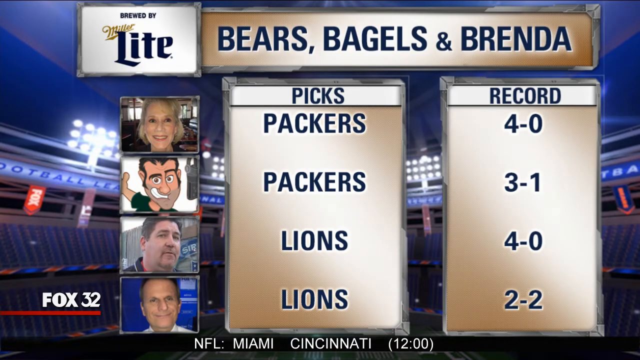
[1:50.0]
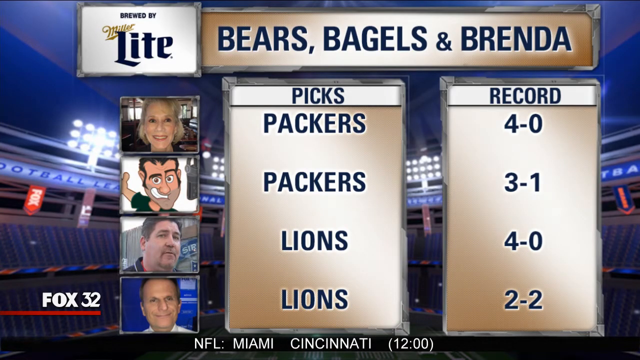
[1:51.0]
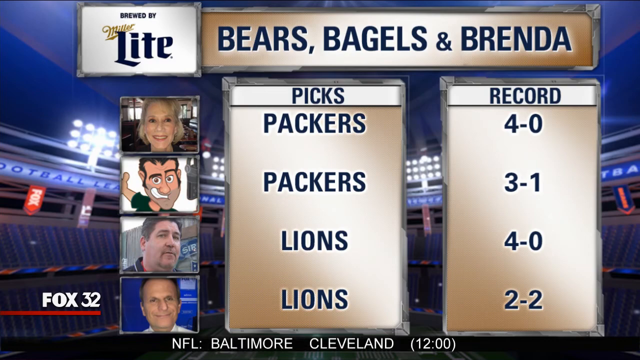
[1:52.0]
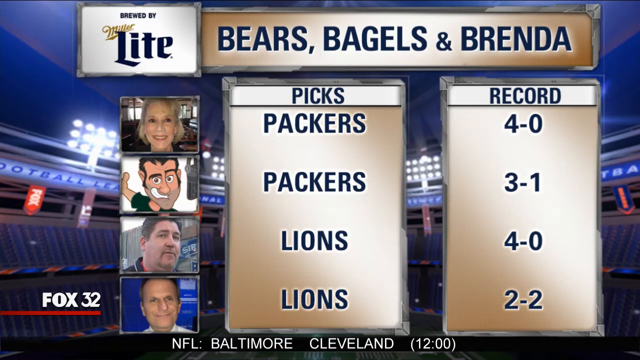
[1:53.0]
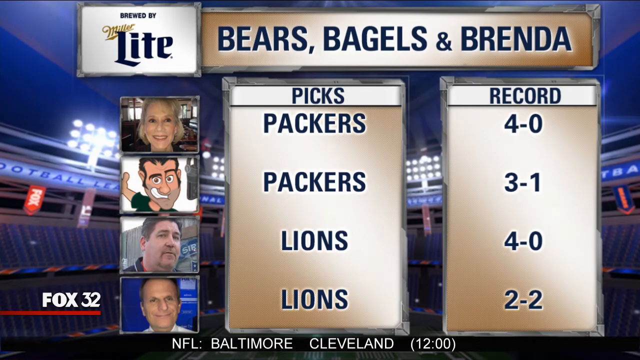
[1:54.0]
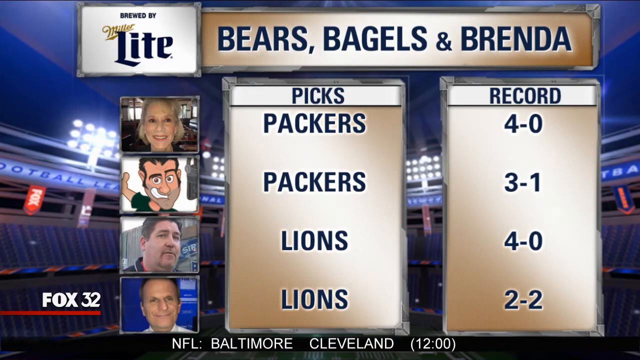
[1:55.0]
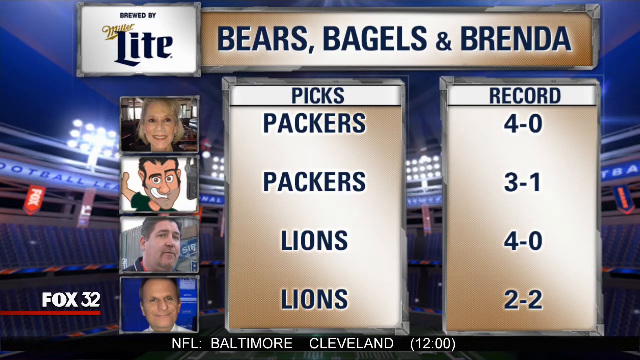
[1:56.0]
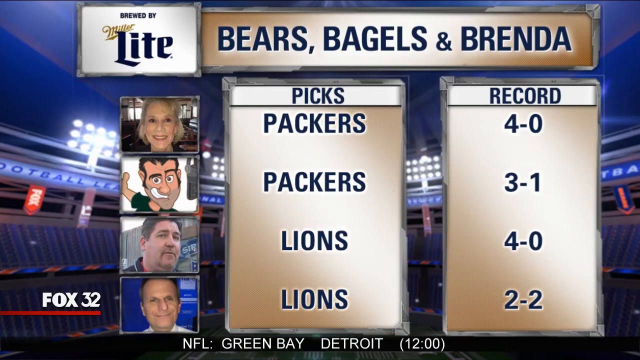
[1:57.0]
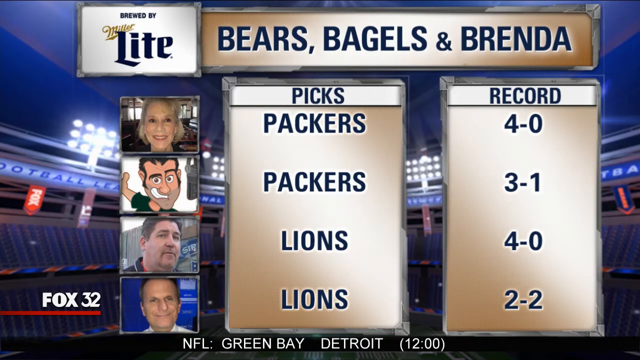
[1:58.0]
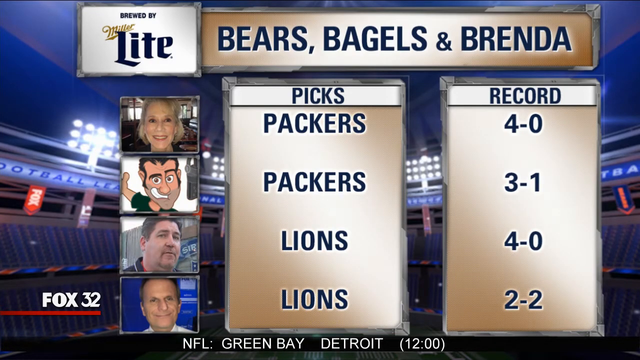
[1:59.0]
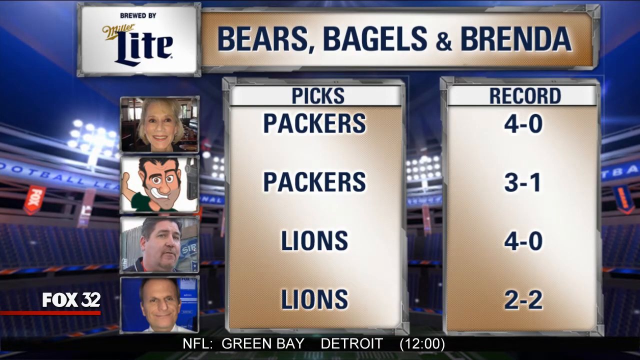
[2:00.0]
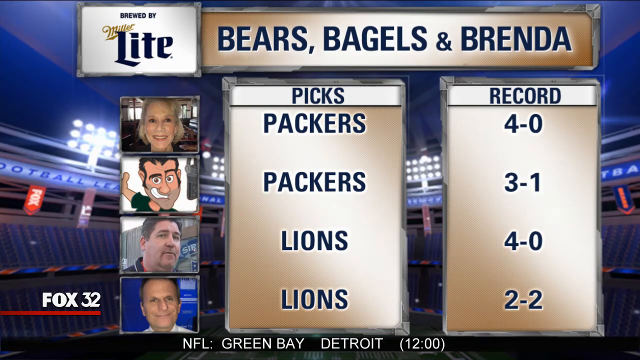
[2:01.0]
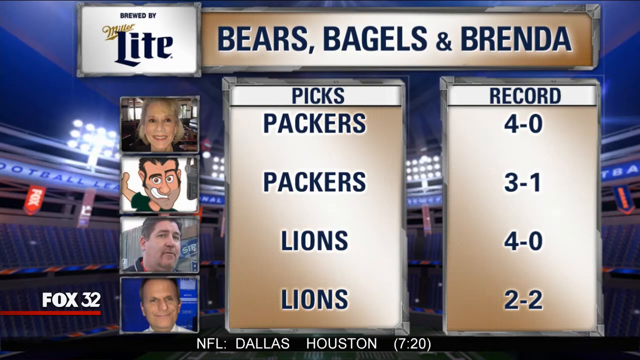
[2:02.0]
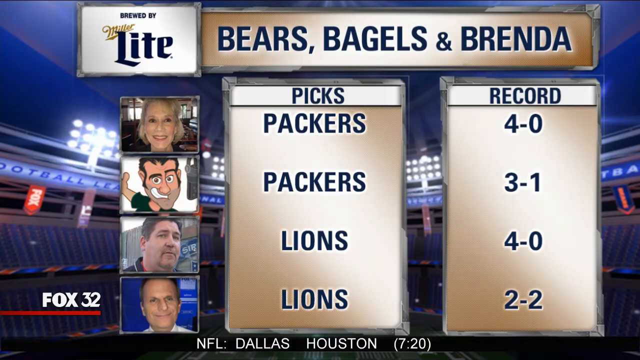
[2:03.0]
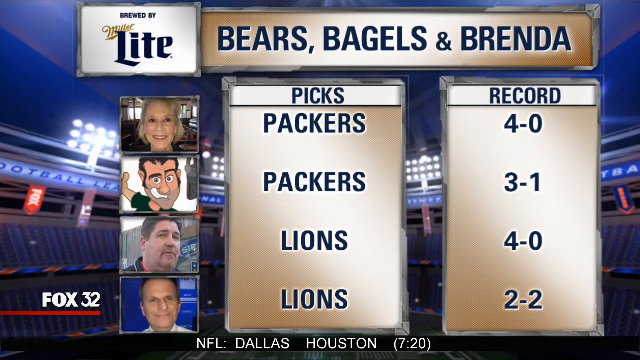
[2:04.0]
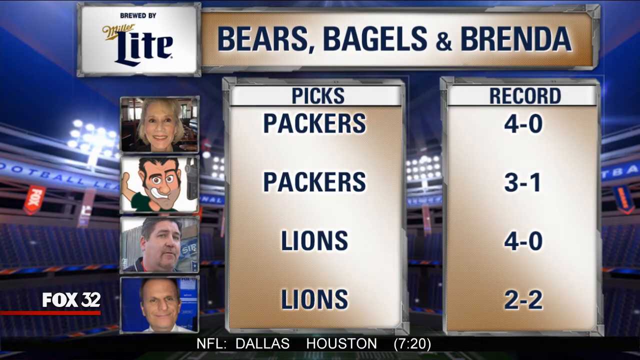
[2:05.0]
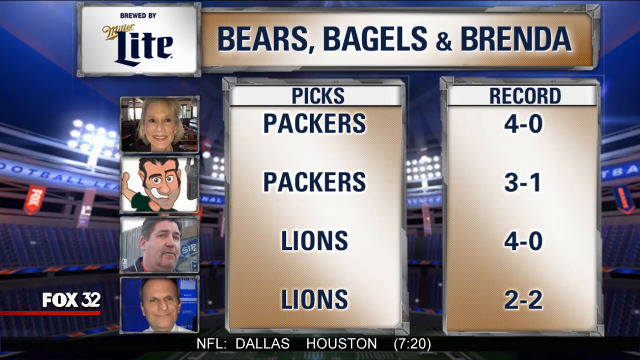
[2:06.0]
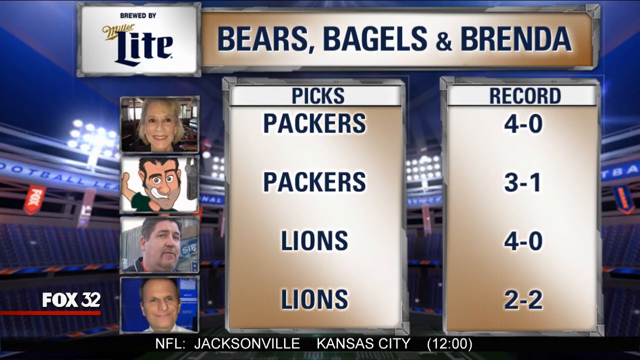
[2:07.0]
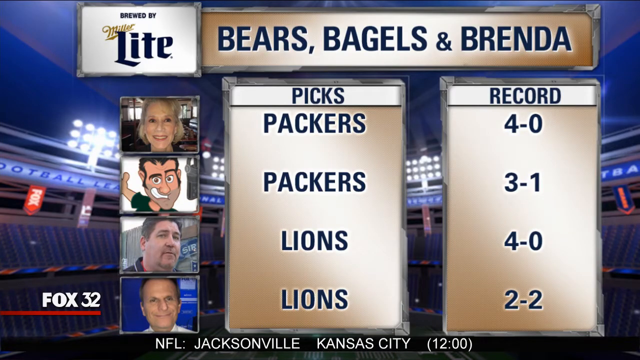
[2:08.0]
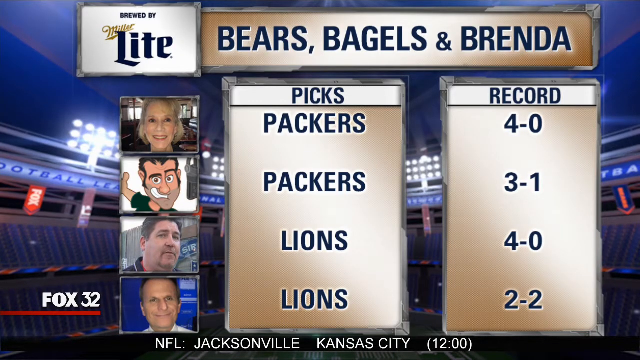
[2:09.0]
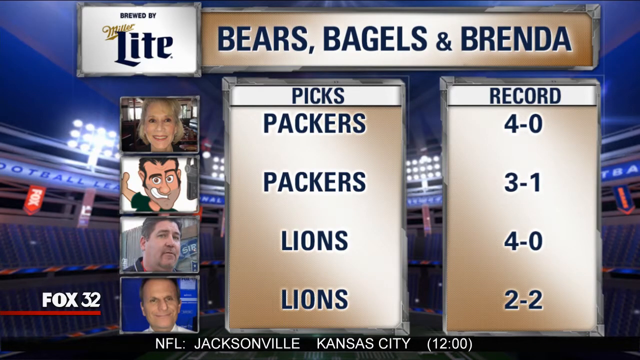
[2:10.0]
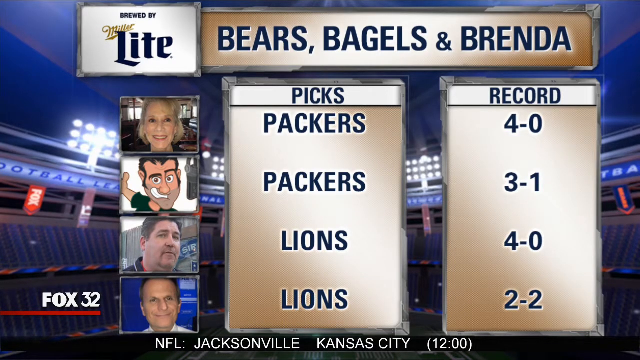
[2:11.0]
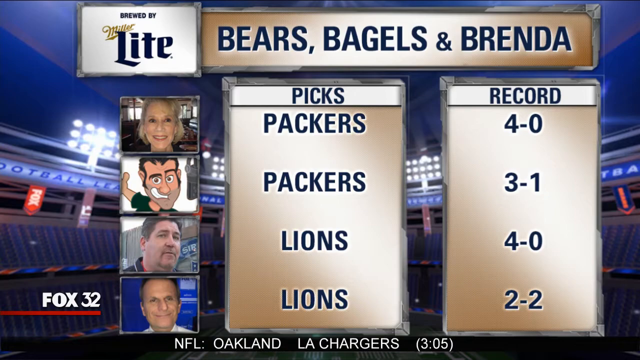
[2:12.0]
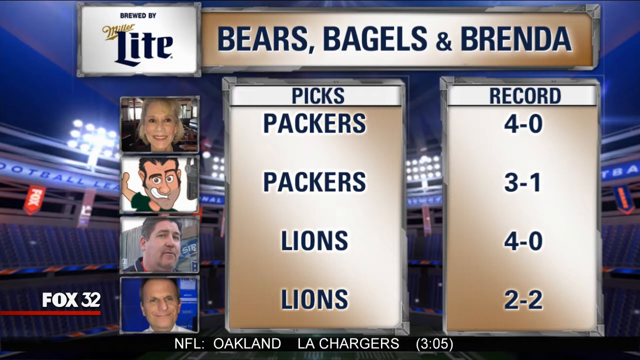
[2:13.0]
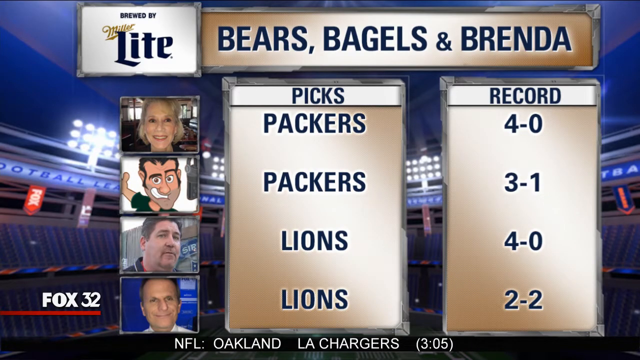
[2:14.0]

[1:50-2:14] A screen reads "Bears, Bagels and Brenda" on top, with the Miller Lite logo at the top left. Under the headings "picks" and "record" it shows who chose whom: the first two chose the Packers, with records of 4-0 and 3-1, and the bottom two chose the Lions, with 4-0 and 2-2. The background is a stadium with lights. Along the bottom run many NFL results, including Jacksonville, Oklahoma, Green Bay, Dallas, Houston, Baltimore, Cleveland and Kansas, while the rest of the screen still shows the picks and records.